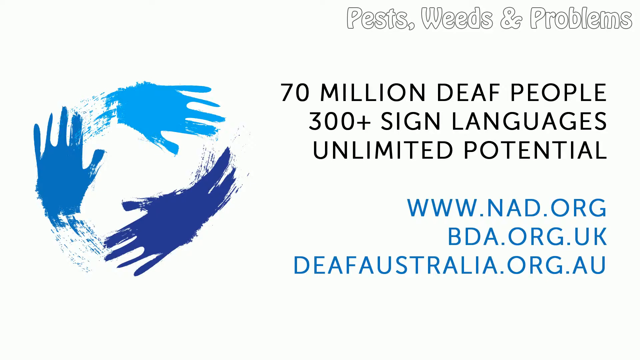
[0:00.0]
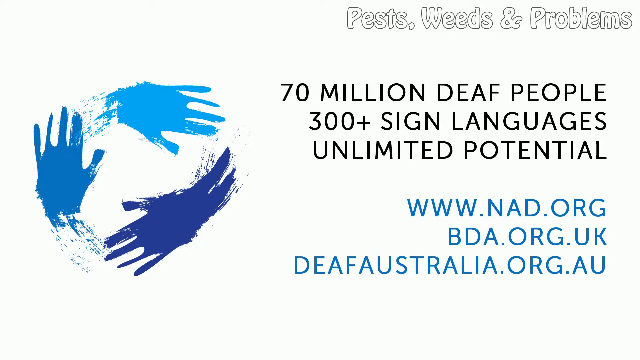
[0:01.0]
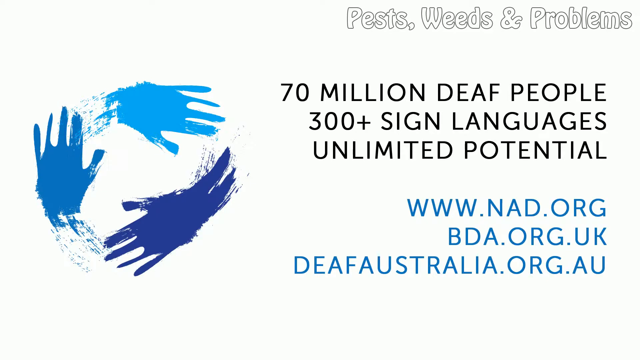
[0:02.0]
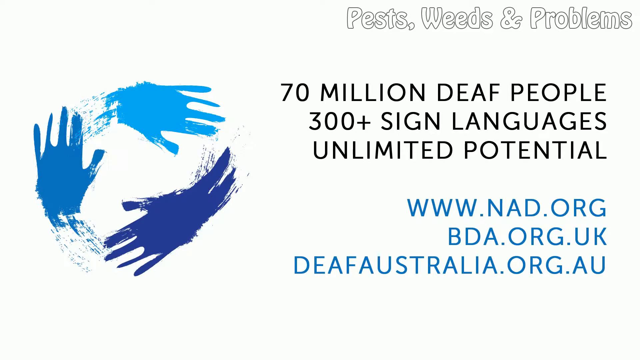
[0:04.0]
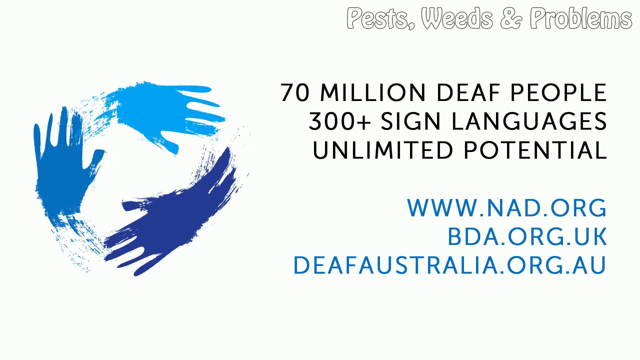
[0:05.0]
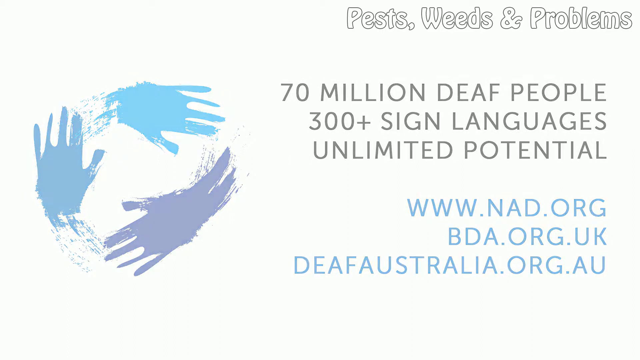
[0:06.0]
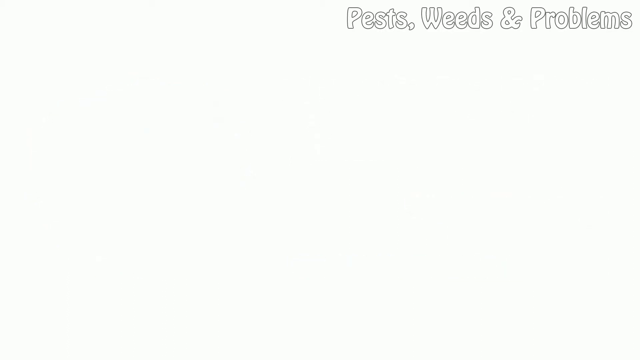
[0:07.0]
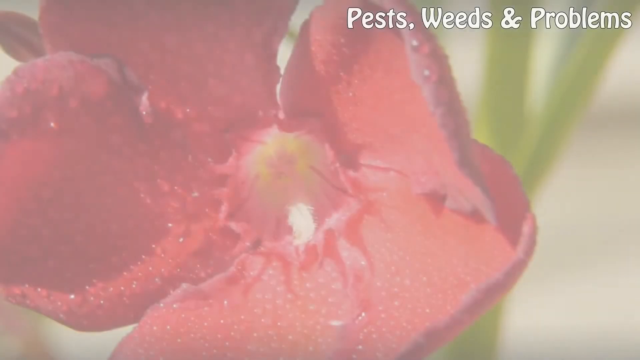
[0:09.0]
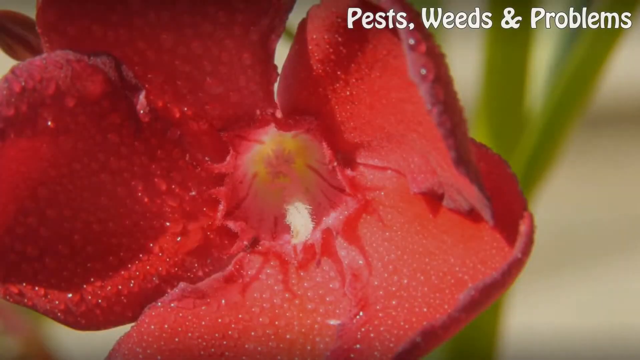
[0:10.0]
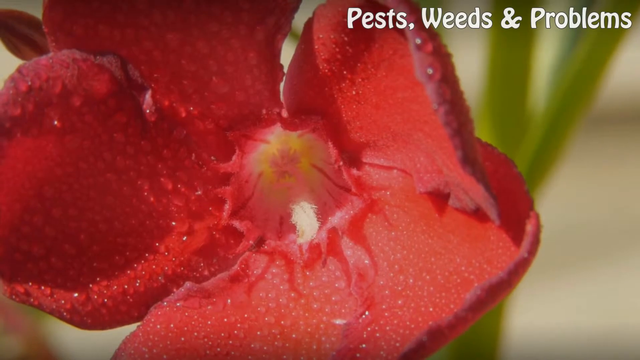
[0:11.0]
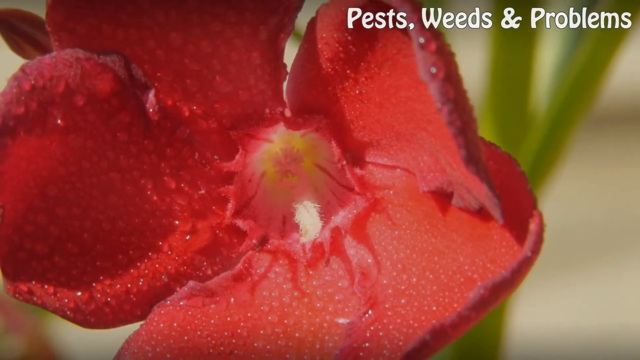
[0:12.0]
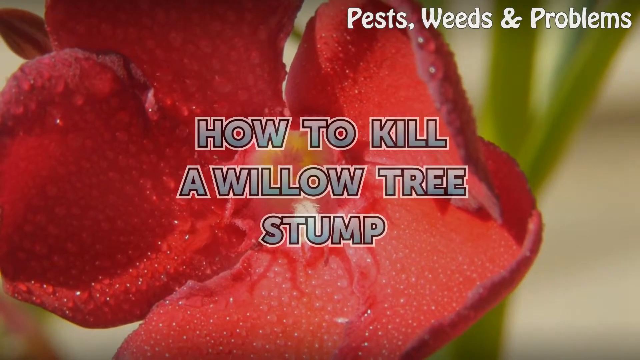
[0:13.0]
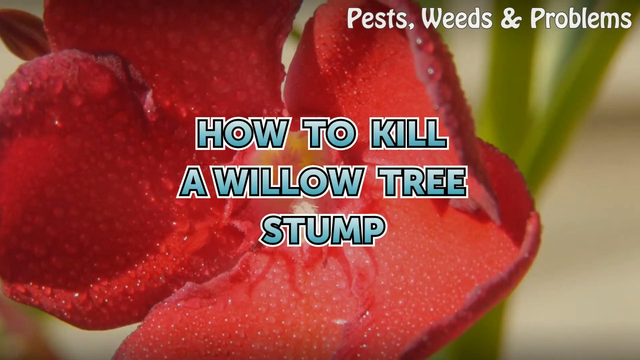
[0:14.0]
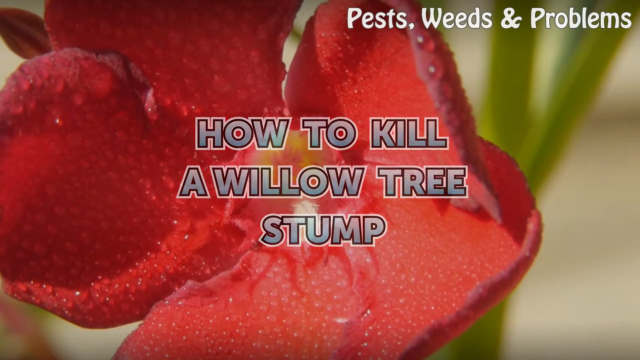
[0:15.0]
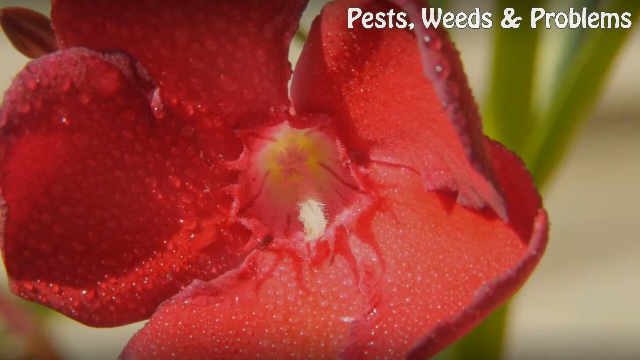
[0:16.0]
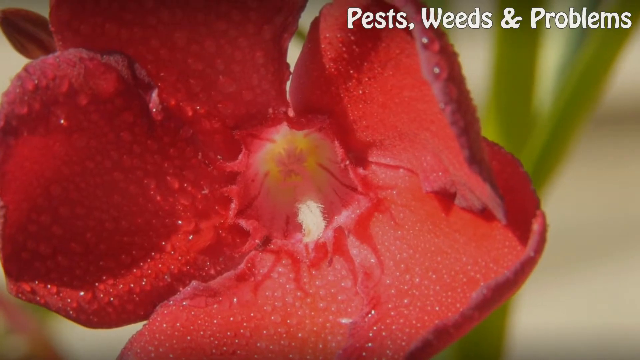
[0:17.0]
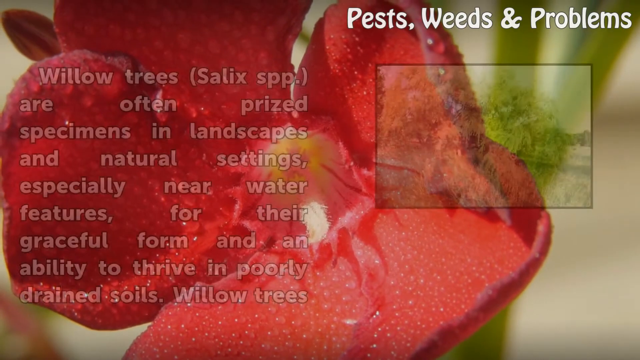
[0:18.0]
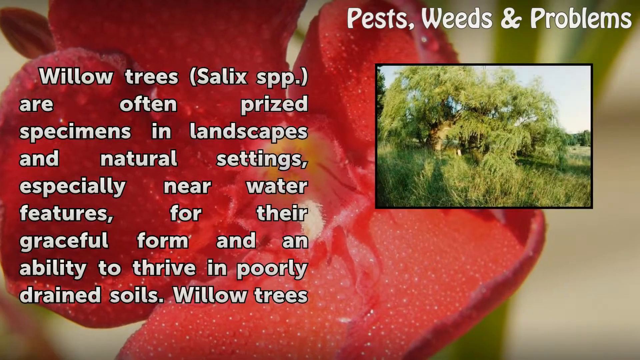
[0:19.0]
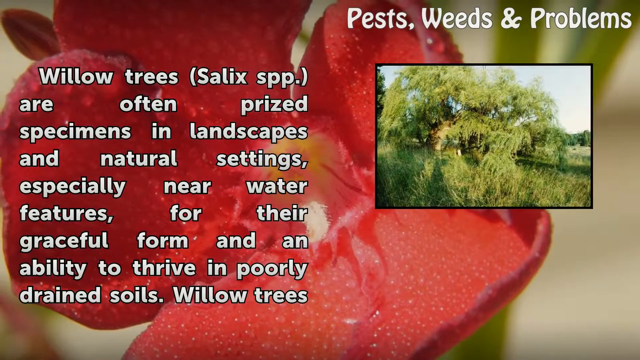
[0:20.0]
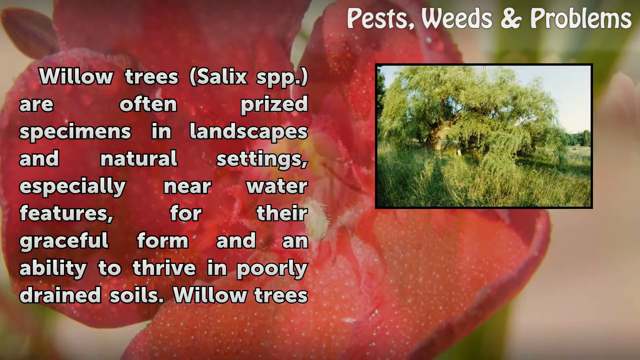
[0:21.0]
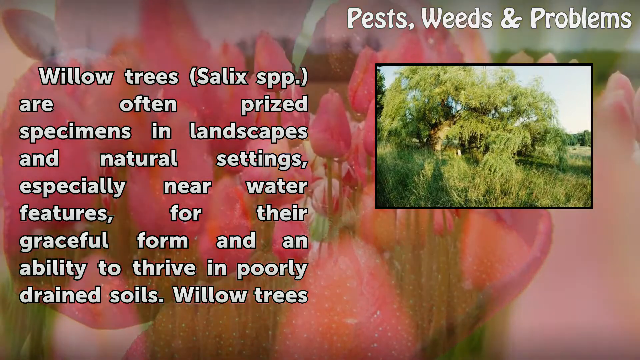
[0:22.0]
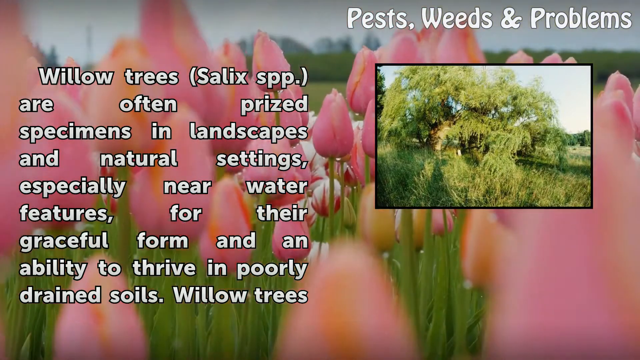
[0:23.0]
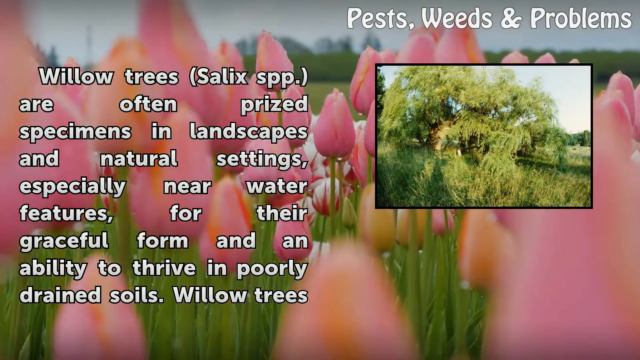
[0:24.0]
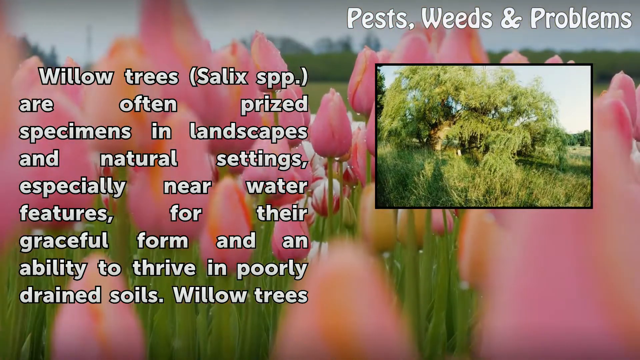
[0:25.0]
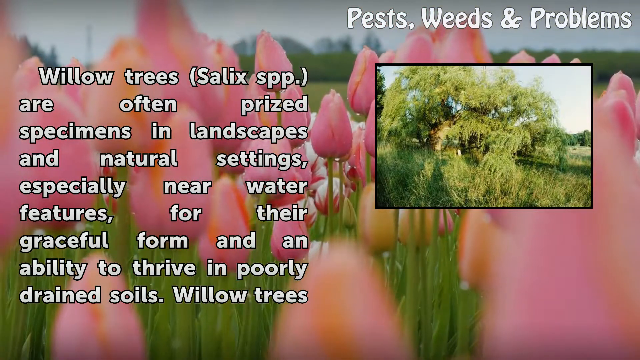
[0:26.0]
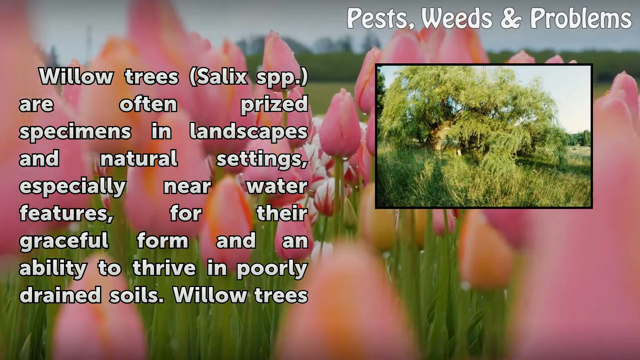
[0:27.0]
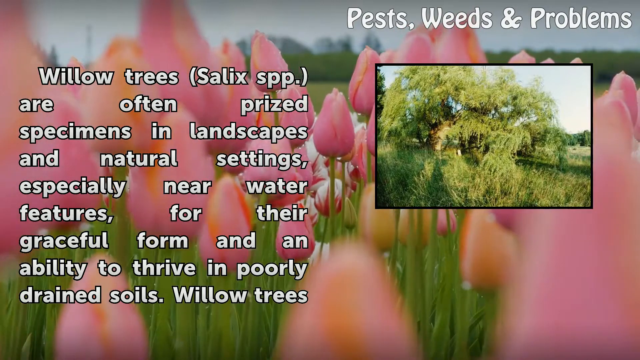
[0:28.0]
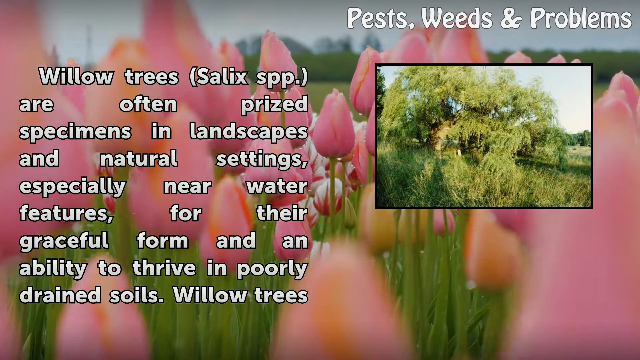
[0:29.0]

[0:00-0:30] In the right-hand corner, text reads "pests, weeds & problems". In black font, text reads "70 million deaf people", the next line reads "300+ sign languages", and the next line reads "unlimited potential". After some space, "www.nad.org" appears in blue, along with what appears to be "bda.org.uk" and what appears to be "deafaustralia.org.au". This stays up for a few seconds. Three blue handprints appear, forming something like a circle. Then a red flower appears that looks moist, with water droplets. Text reads "how to kill a willow tree stump", followed by "willow trees (salix spp.) are often prized specimens in landscapes and natural settings, especially near water features for their graceful form and ability to thrive in poorly drained soils."